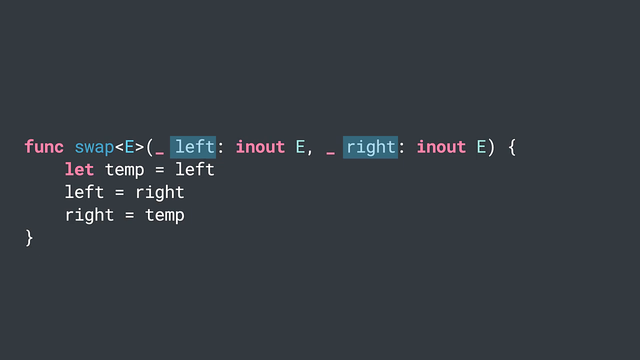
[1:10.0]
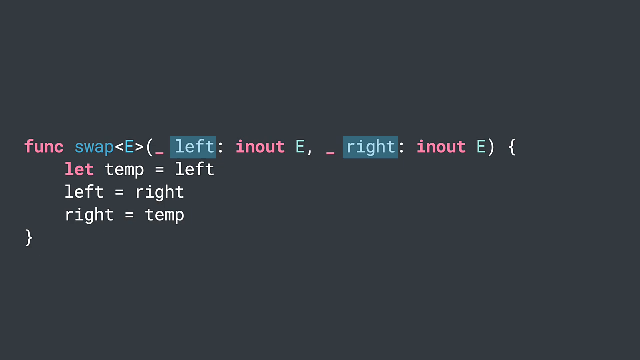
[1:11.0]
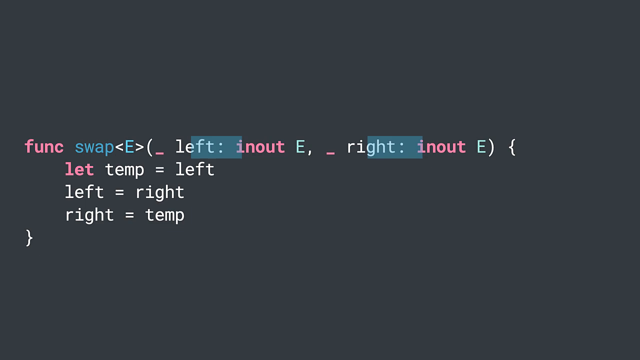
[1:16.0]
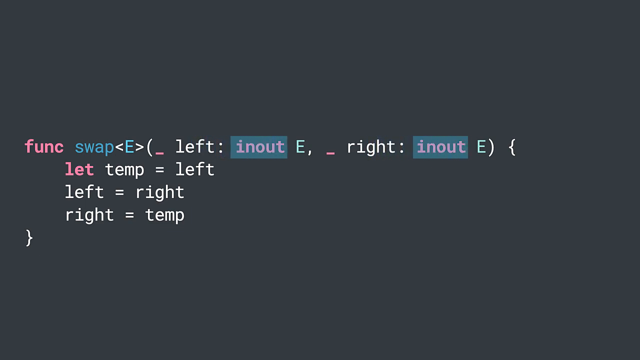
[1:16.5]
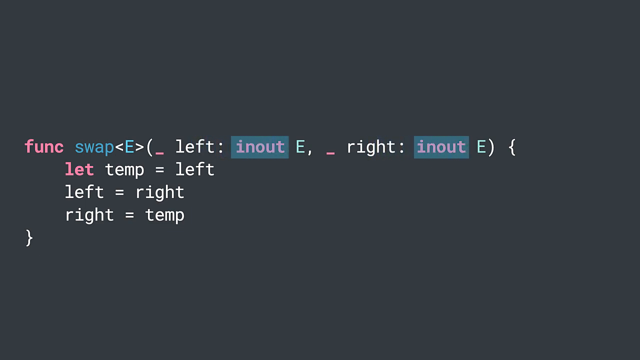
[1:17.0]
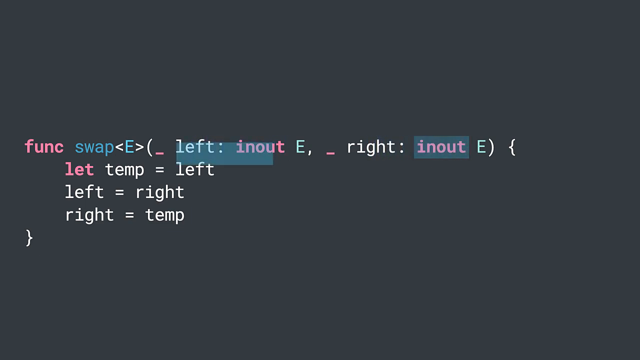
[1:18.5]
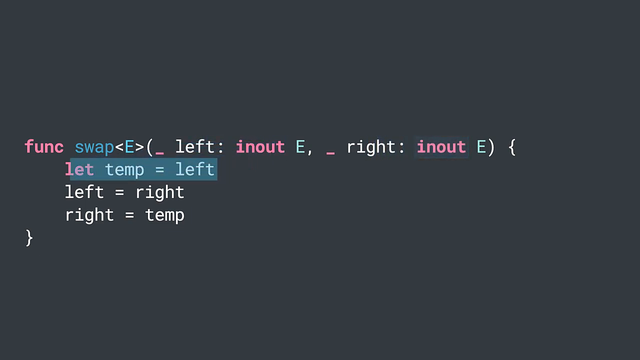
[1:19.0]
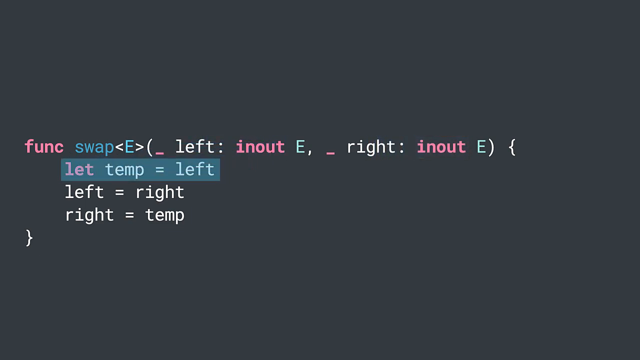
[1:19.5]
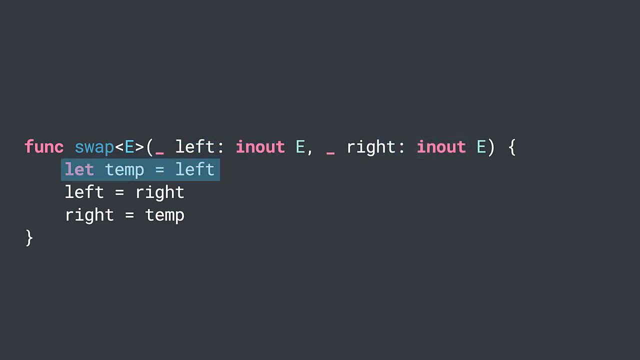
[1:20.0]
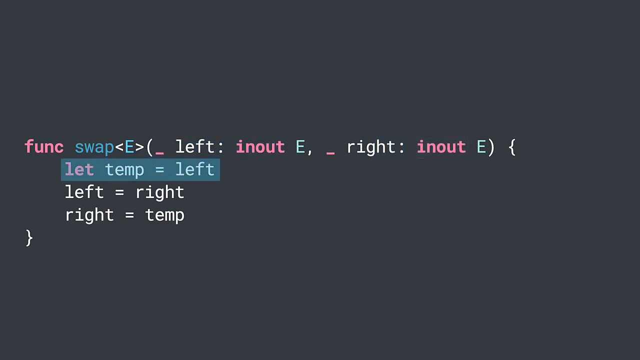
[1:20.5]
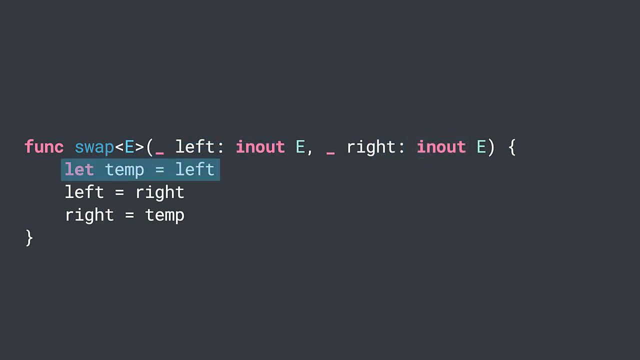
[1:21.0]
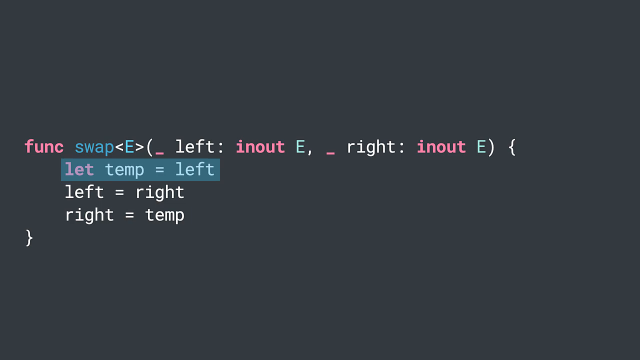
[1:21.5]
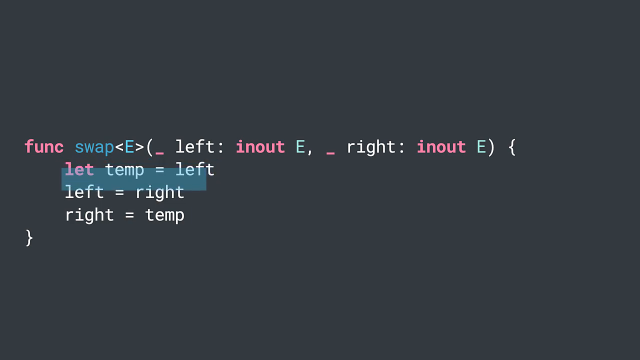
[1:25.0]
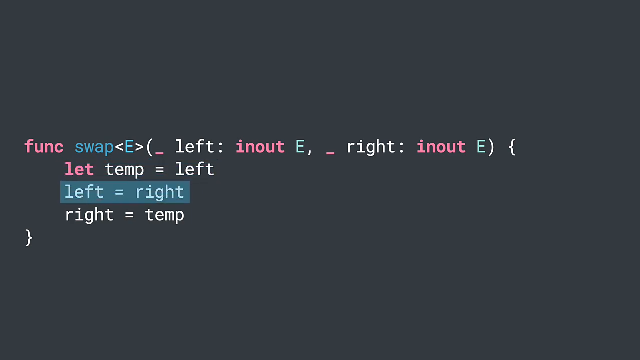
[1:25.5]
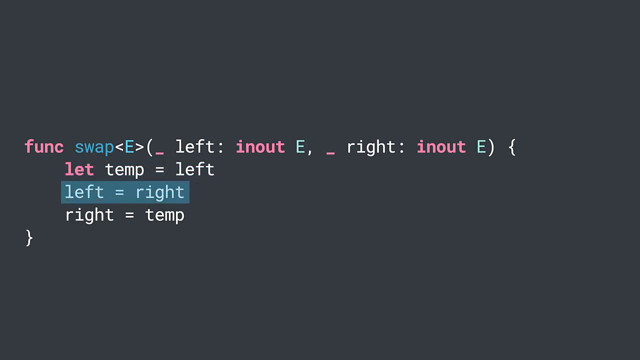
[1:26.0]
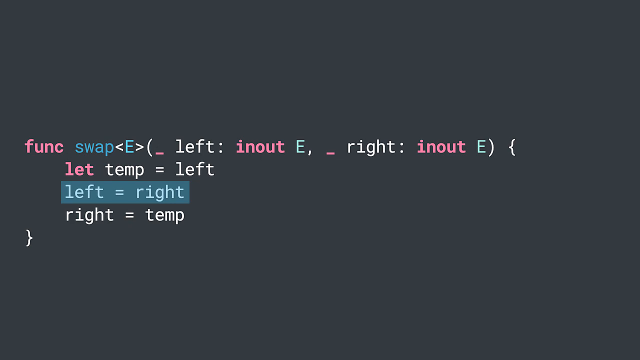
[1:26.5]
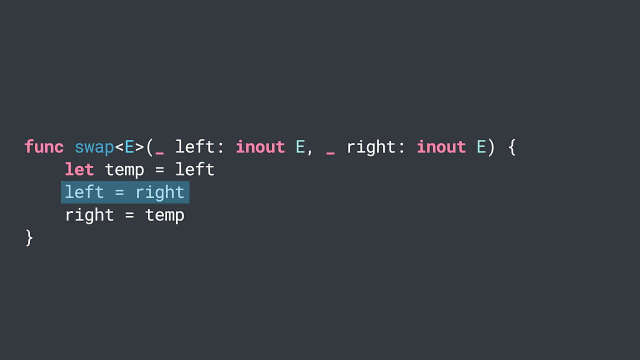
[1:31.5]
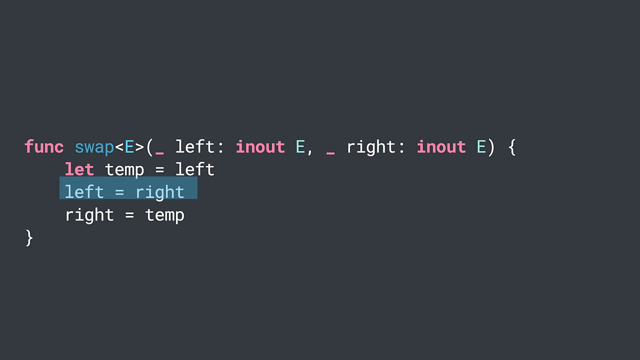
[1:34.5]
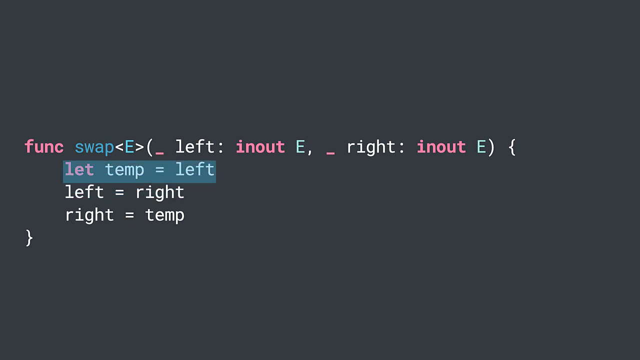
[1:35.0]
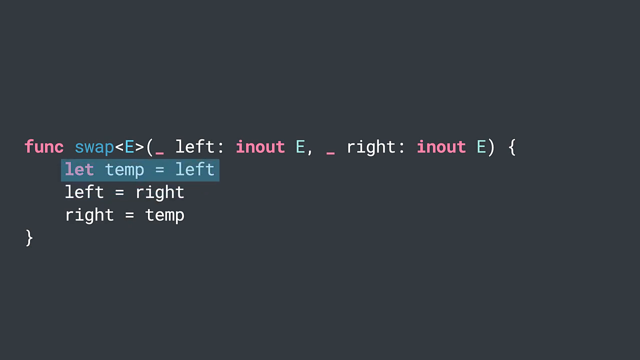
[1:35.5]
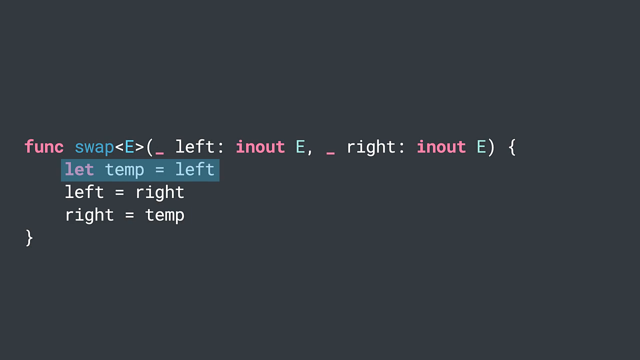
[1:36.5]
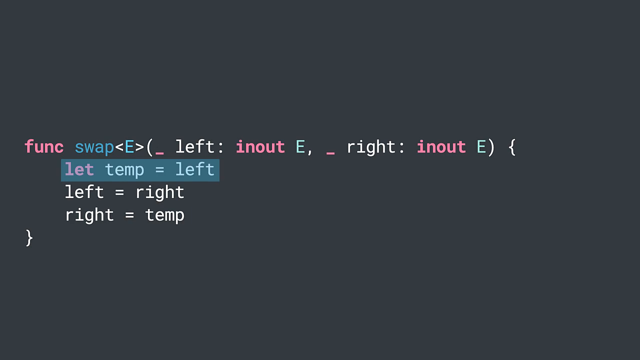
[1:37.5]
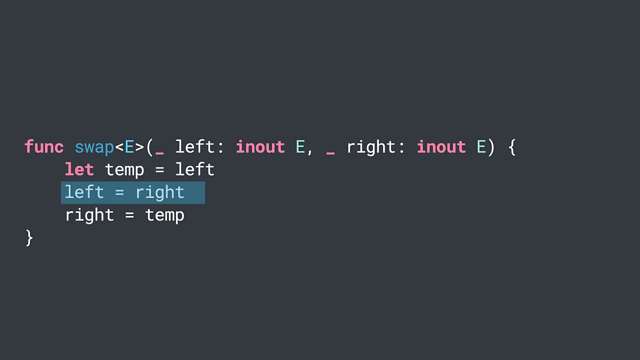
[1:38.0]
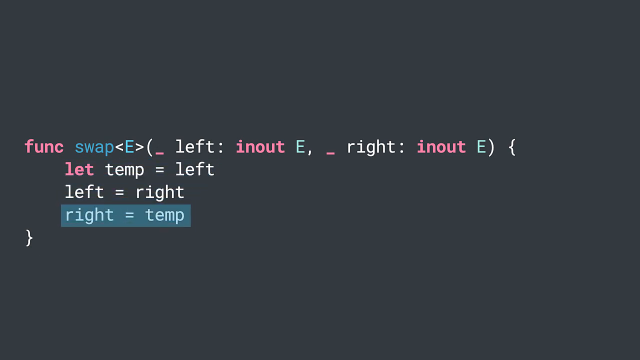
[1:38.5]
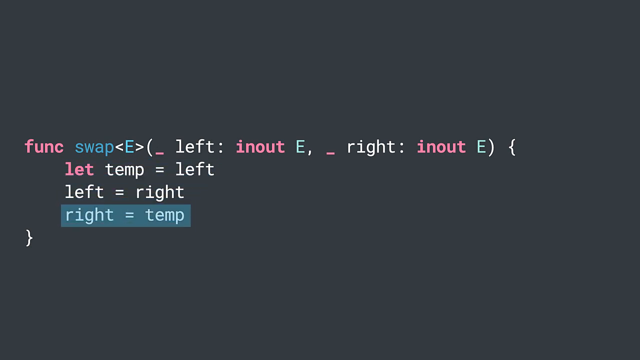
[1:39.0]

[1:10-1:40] A black screen shows error messages, apparently indicating that something is not functioning correctly. The text says "input" twice. A blue bar highlights sections of the message and moves down toward the bottom of the screen. The rest of the screen is black. The message contains symbols such as parentheses, brackets, equal signs, and greater-than and less-than signs. It is a simple message but difficult to read. The screen stays on this message the whole time, and the words are pink, blue, green and white.